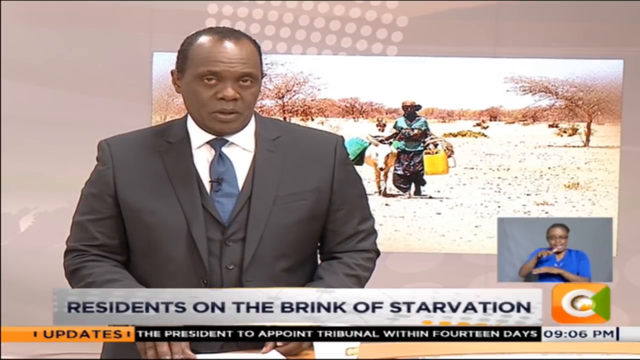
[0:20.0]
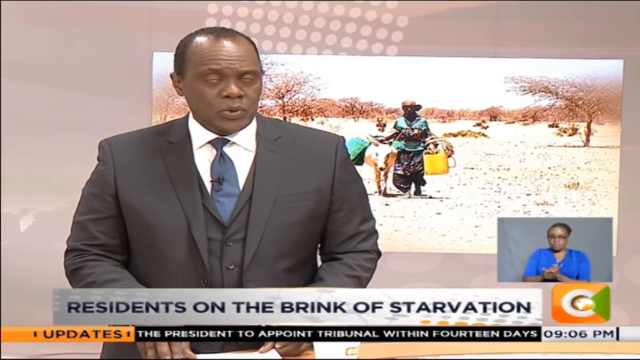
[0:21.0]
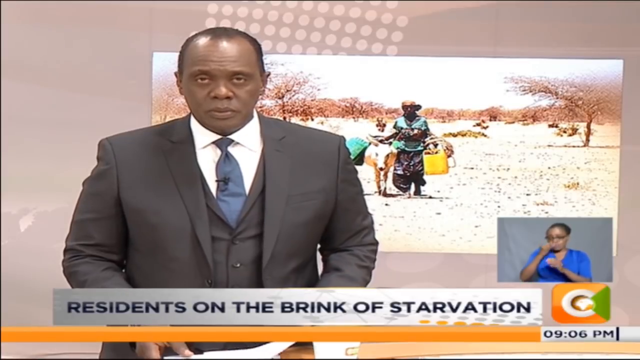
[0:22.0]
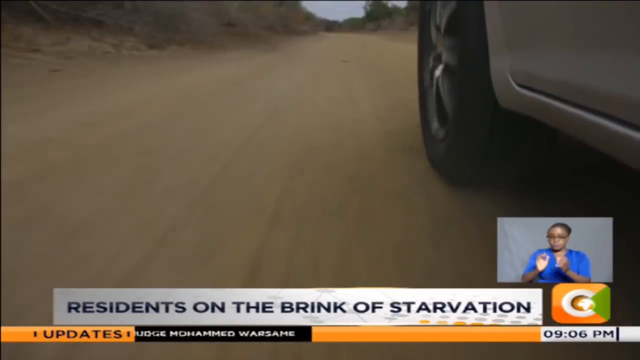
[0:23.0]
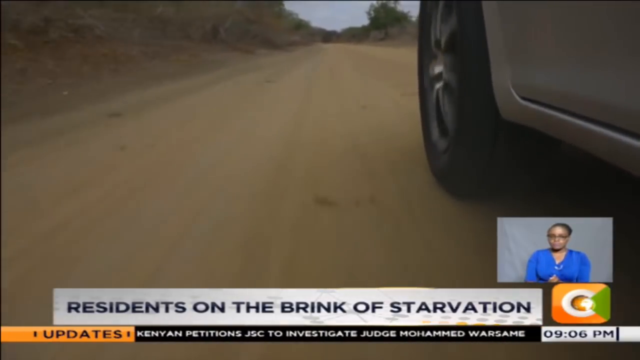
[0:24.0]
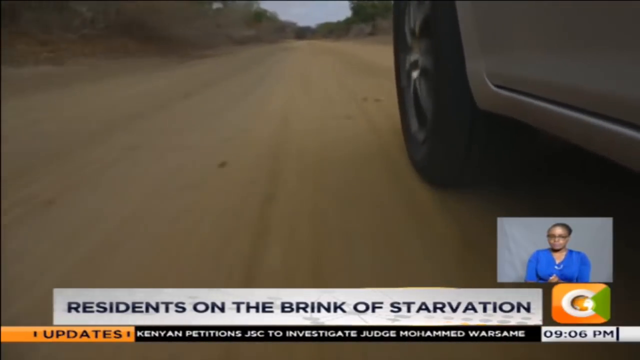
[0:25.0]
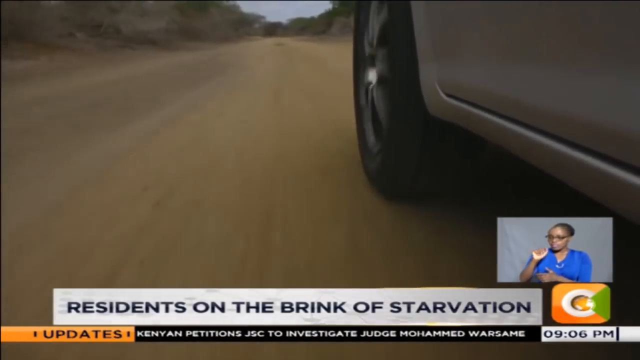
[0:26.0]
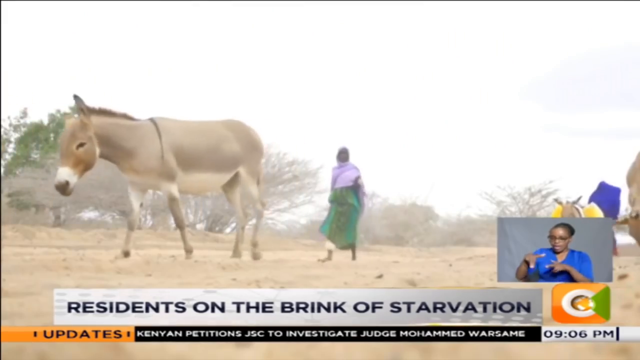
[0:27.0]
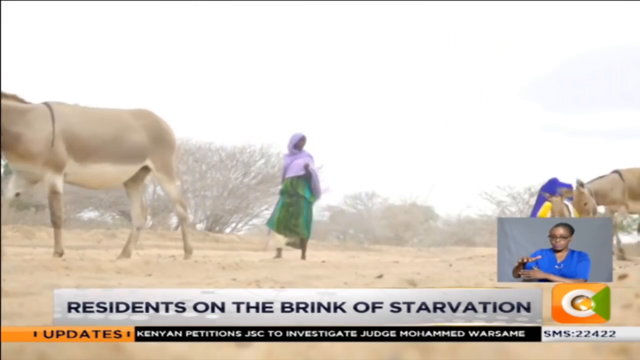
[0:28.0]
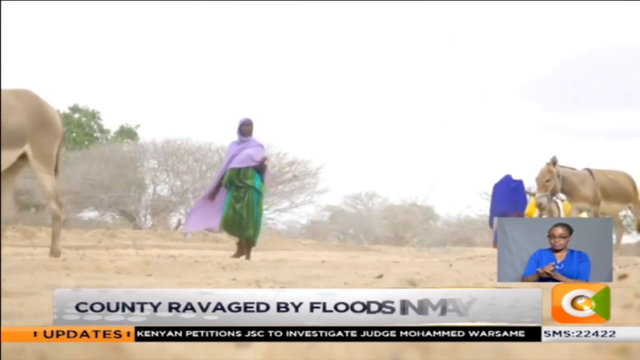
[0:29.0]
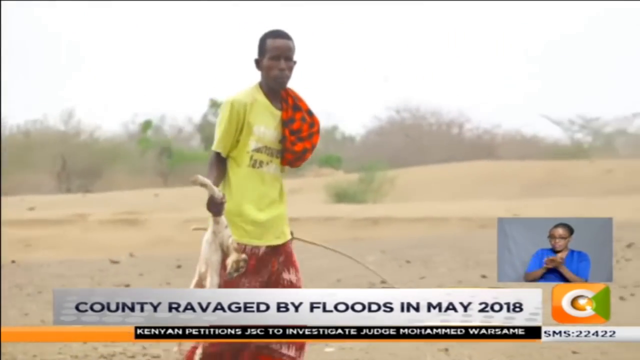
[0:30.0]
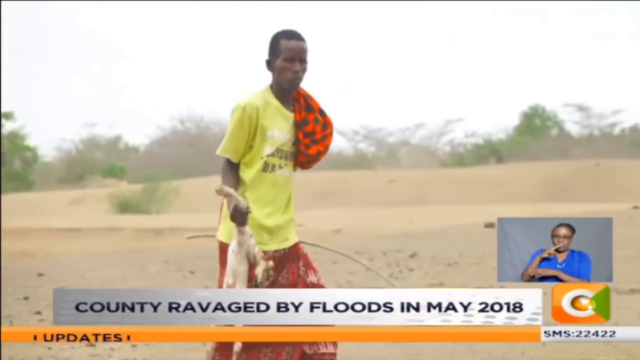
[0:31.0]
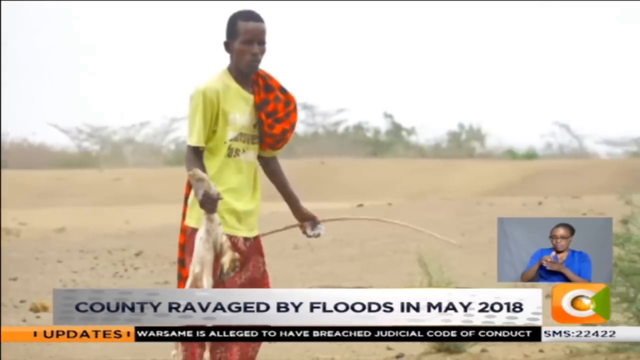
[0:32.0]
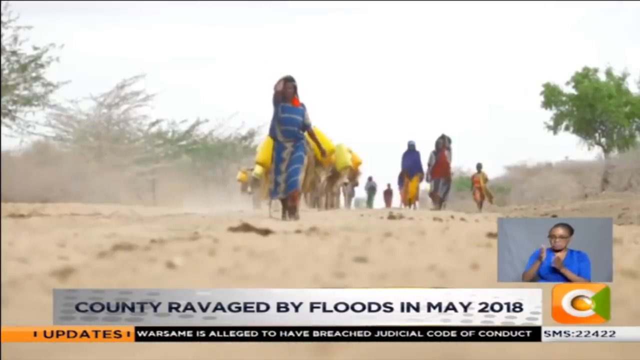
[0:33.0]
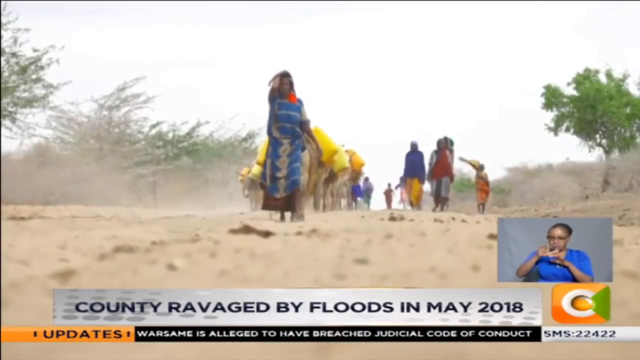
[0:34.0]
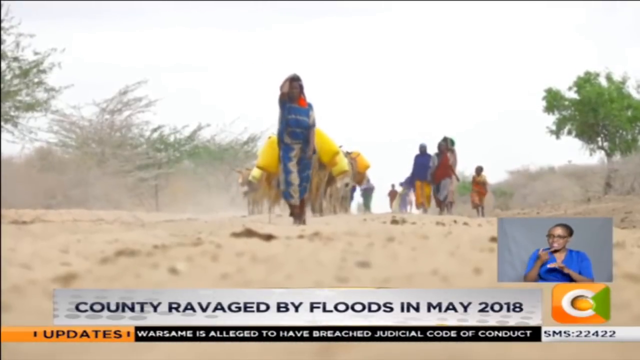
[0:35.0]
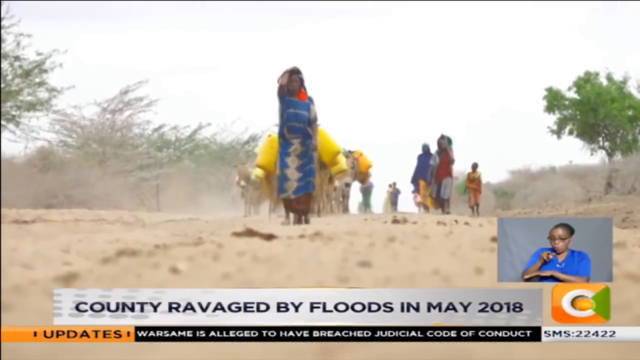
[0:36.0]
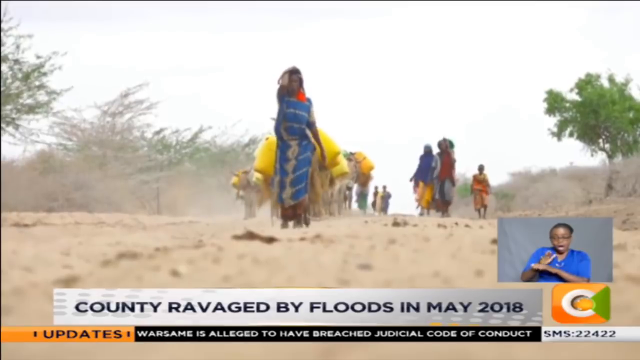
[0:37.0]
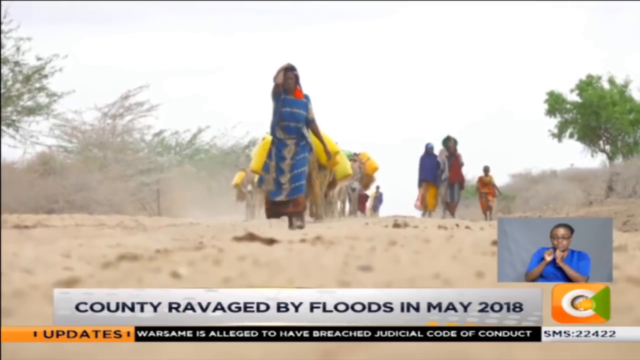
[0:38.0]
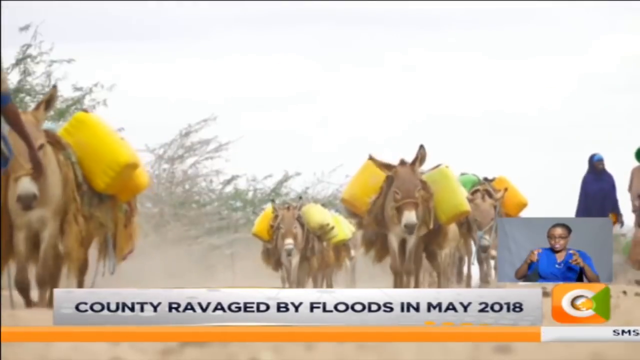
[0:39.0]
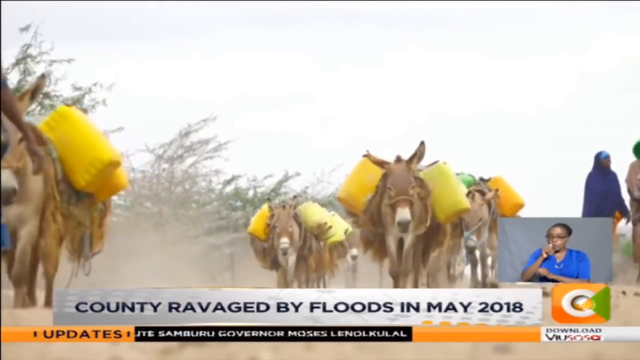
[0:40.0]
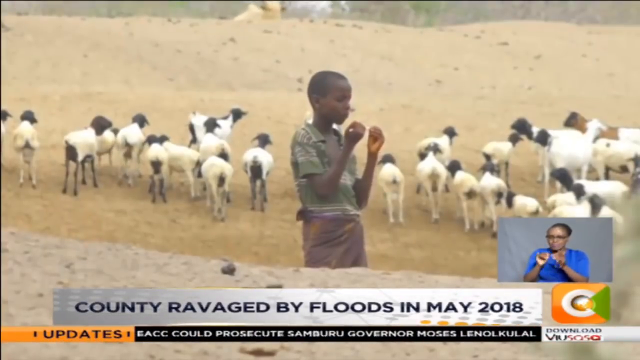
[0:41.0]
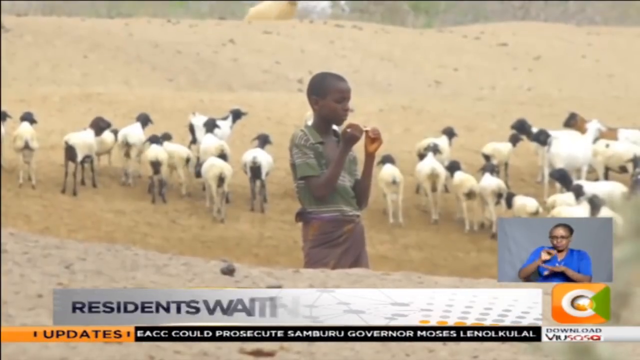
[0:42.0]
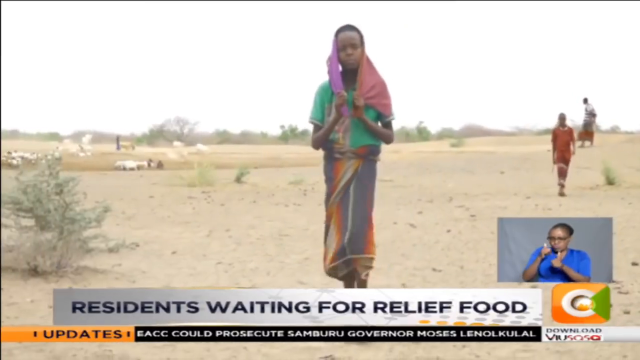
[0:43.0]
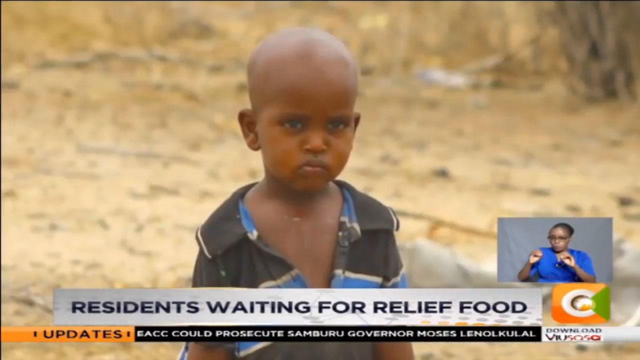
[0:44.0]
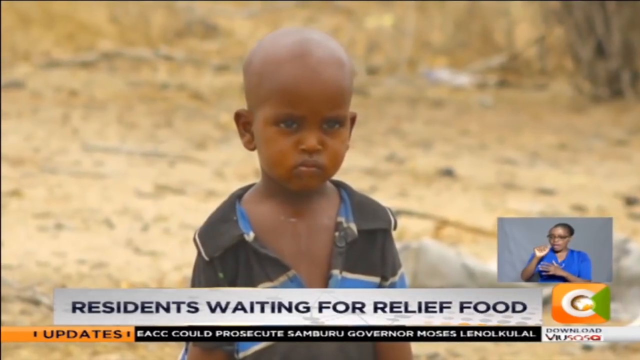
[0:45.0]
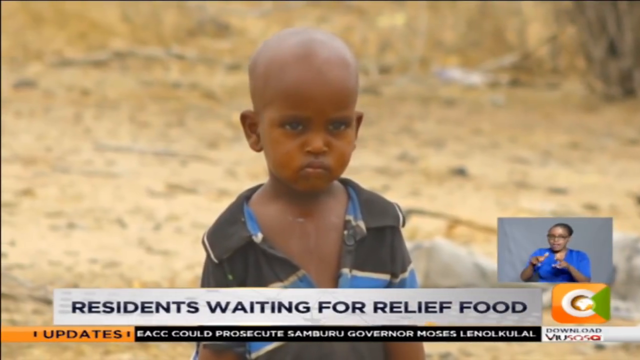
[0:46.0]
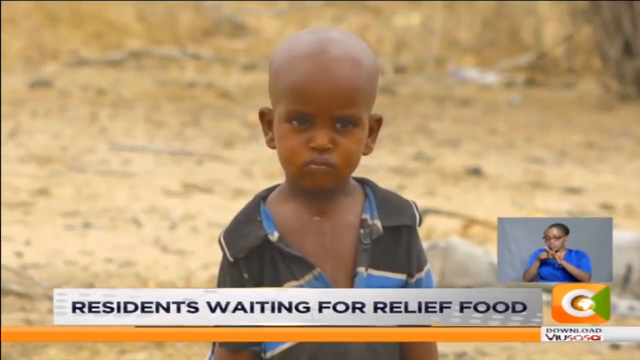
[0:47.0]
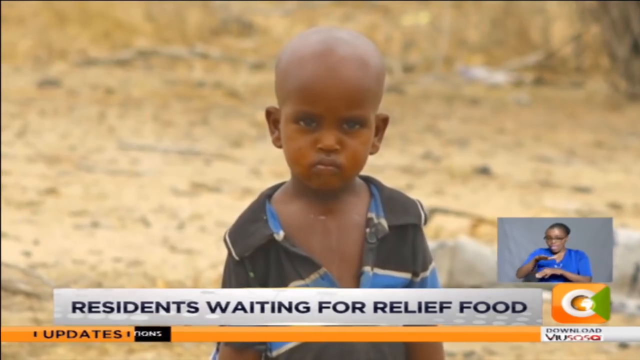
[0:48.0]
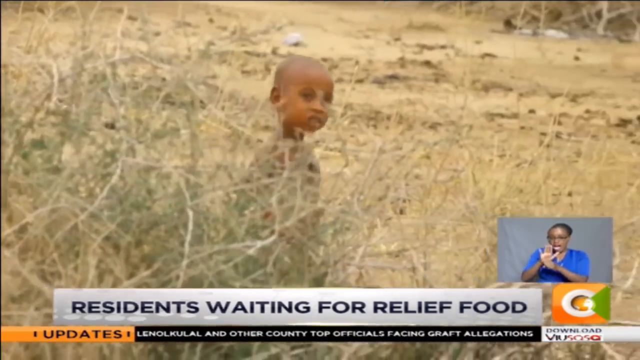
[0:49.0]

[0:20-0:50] The man finishes his part of the story, and the report moves into edited footage. It begins with a view of what looks to be a car driving, with the camera angle low, somewhere close to the road. Next, various donkeys walk with different people. The person walking in the center of the image wears a green dress with a purple shawl over it. It looks very dusty outside, and the people look famished and very skinny, just looking for food. The sign language interpreter continues signing. Various images of people follow, with kids at the end standing and staring around, looking for things to eat. They look very skinny, apparently affected by the aftermath of the flood.